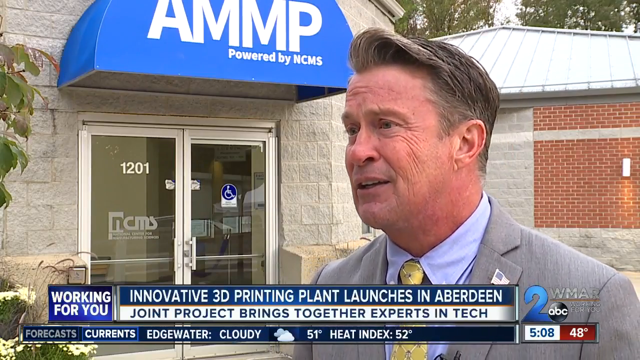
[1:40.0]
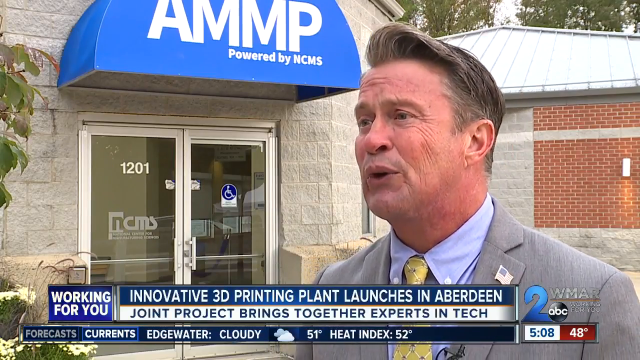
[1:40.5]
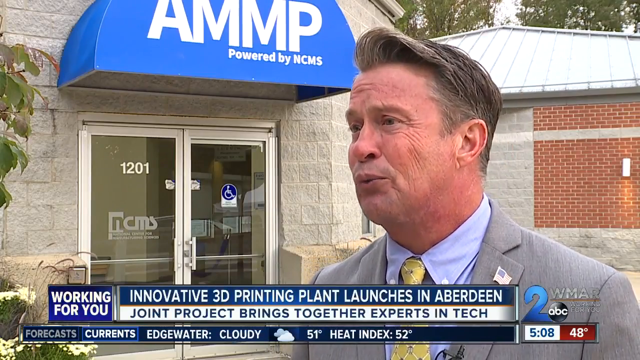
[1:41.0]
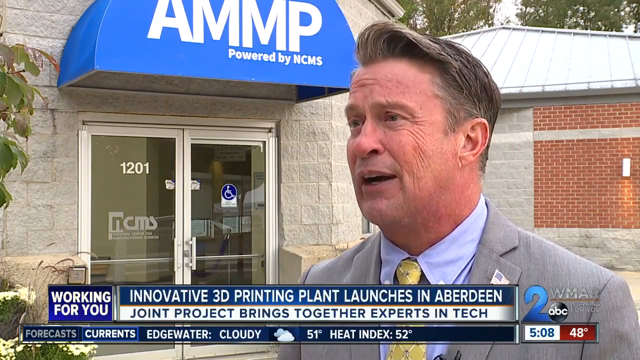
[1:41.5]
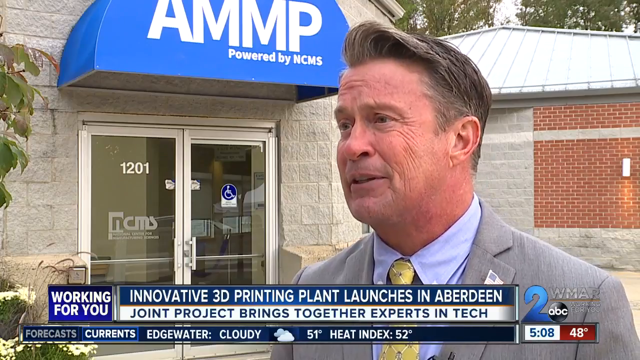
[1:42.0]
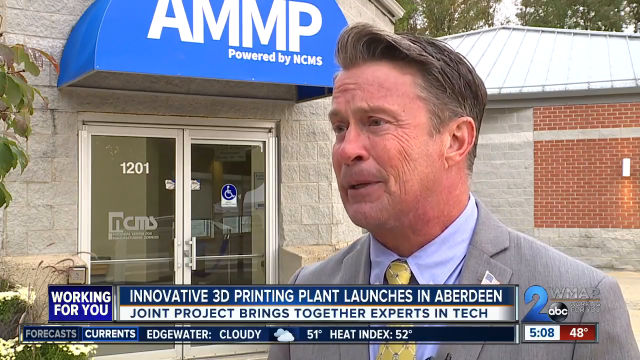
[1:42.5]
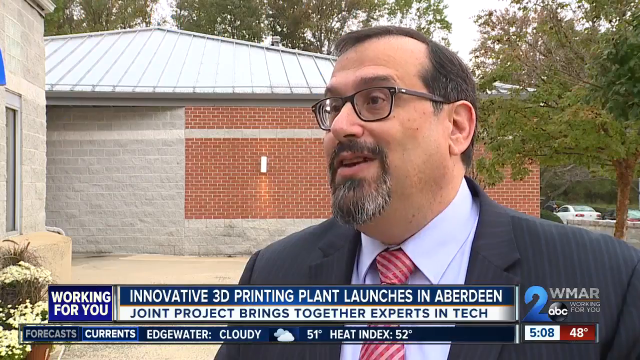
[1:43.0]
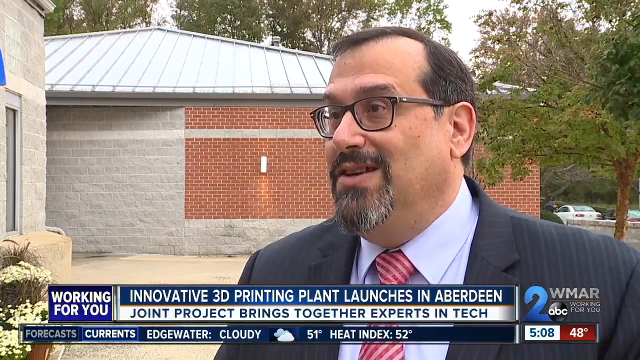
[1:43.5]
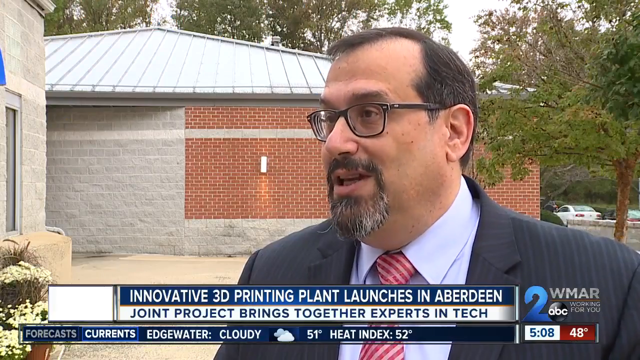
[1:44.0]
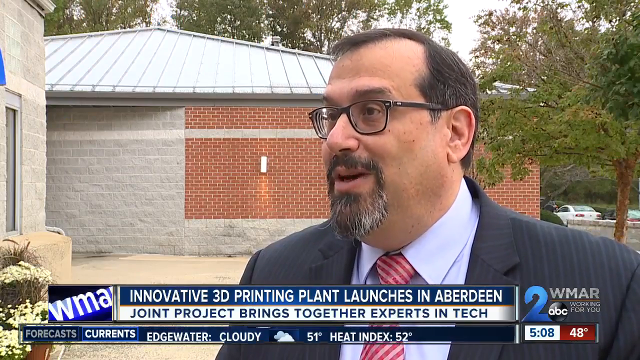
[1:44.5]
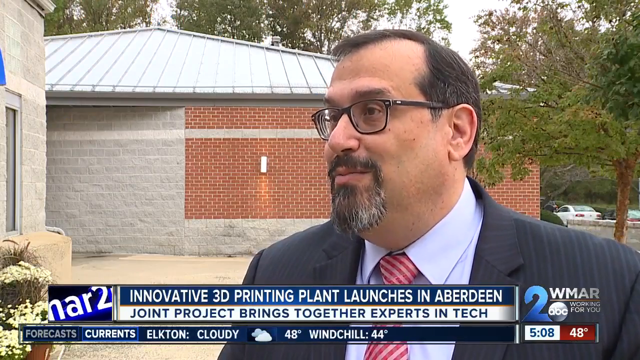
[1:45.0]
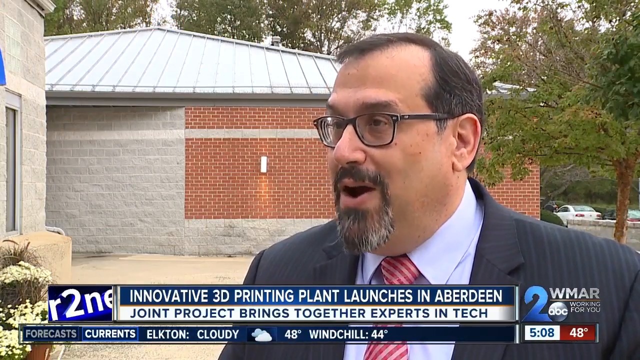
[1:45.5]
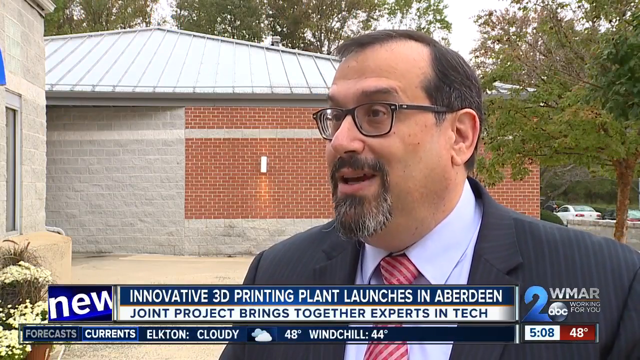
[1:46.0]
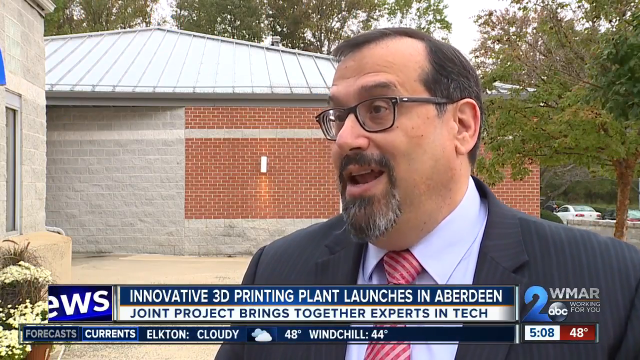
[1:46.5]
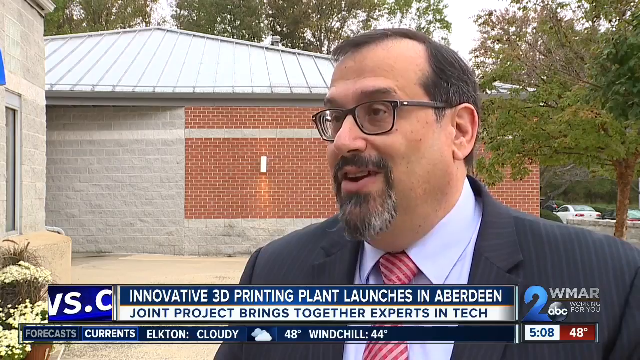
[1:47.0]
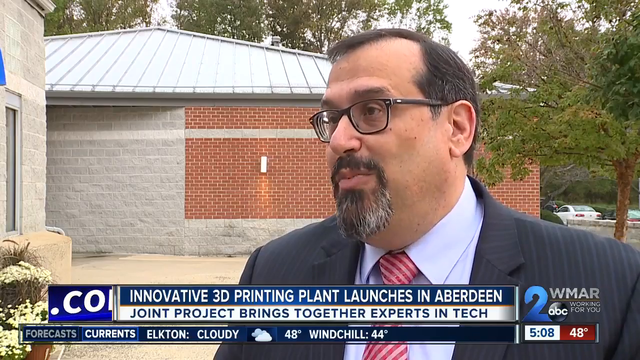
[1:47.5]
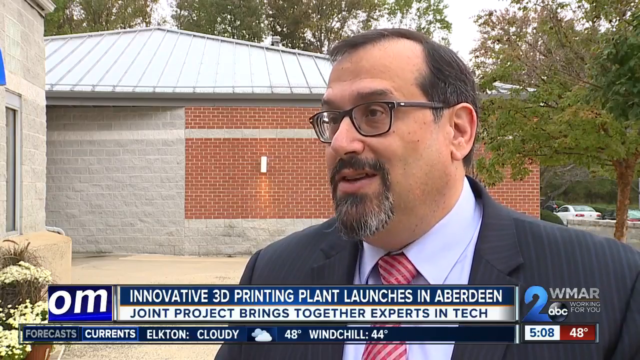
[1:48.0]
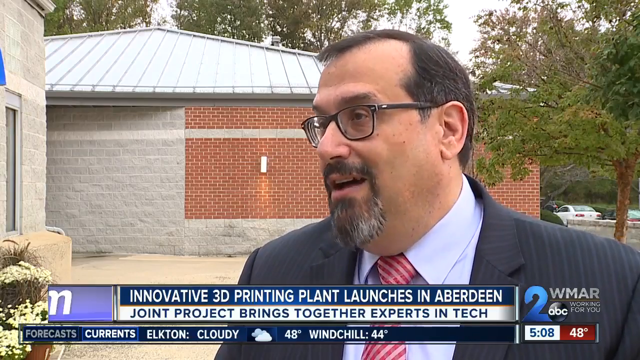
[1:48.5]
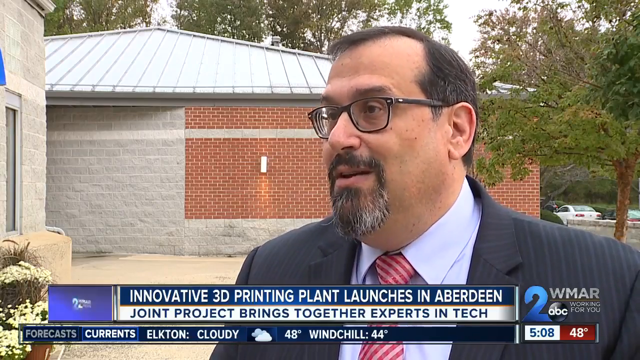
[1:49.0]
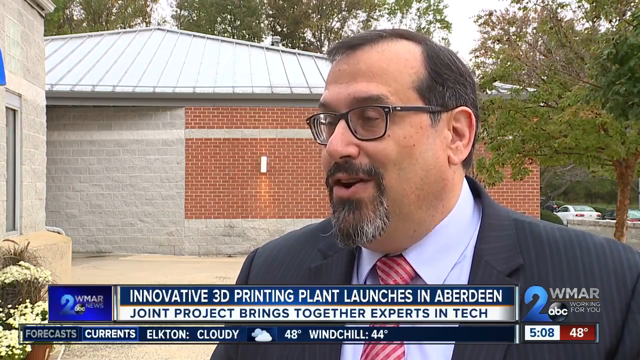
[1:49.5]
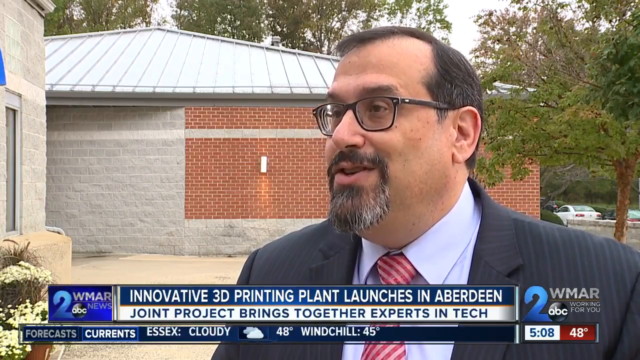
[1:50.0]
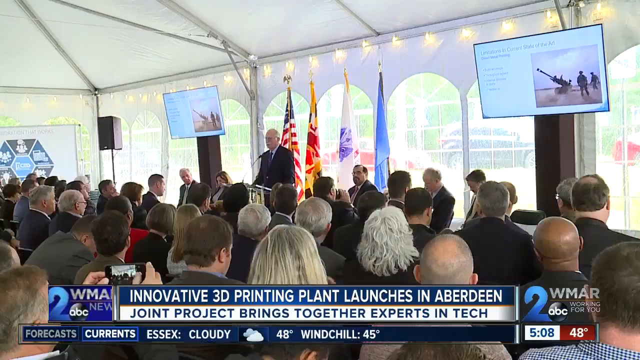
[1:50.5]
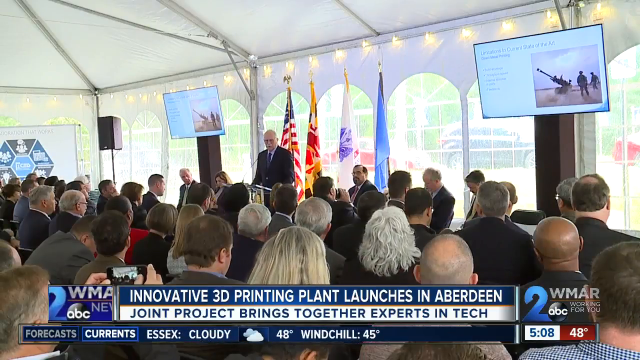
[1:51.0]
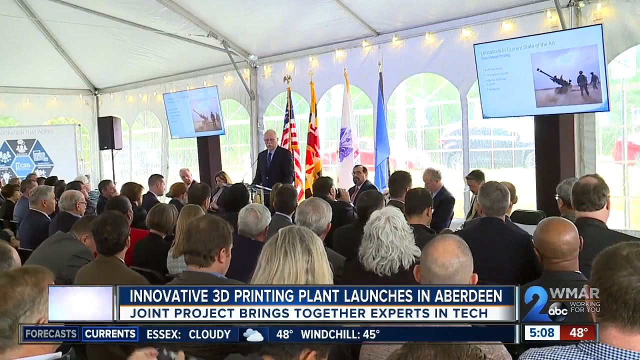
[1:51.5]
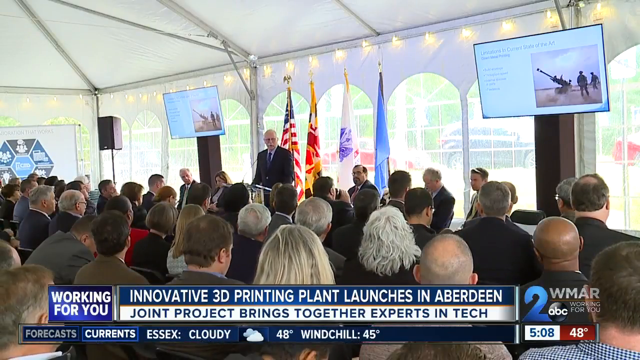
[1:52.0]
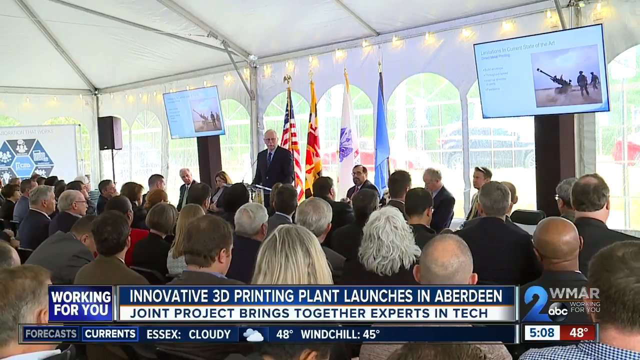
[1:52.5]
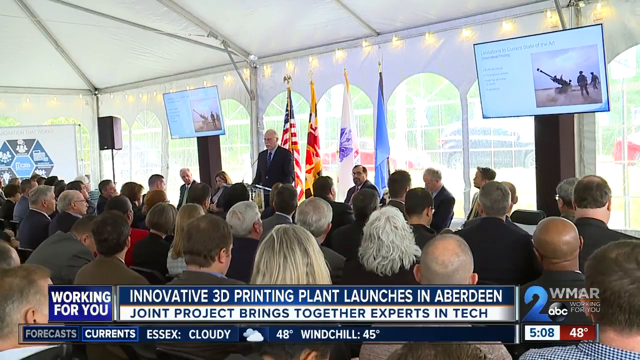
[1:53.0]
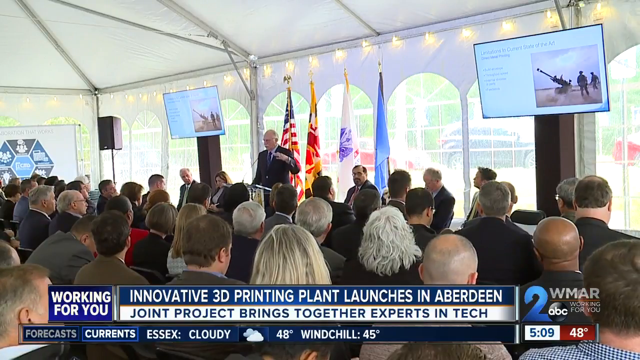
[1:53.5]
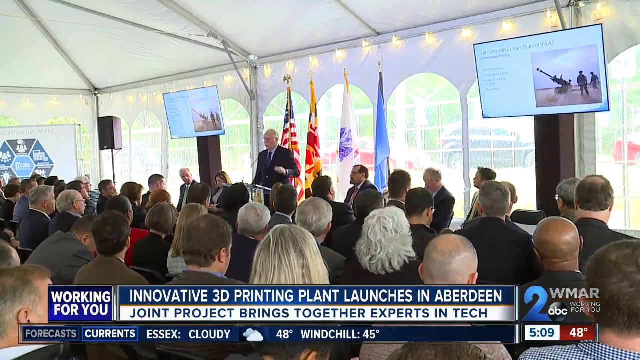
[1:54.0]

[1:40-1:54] Reporter Mark Roper is outside a 3D printing plant in Aberdeen, interviewing two men in business suits one at a time; the men share openly in their separate interviews. The building has a brick and block front of gray blocks and red bricks. A ticker at the bottom reads "Innovative 3D Printing Plant Launches in Aberdeen. Joint Project brings together experts and techs." The news station is Channel 2, WMAR-ABC. Inside a tent, what appears to be a presentation is underway: people are seated, and there is a stage, monitors, screens, and a man at a podium lecturing.